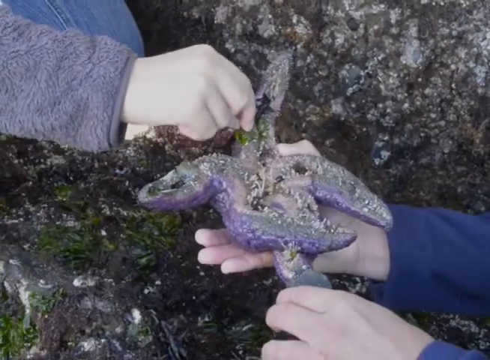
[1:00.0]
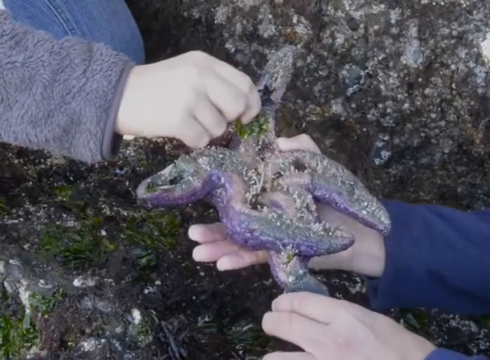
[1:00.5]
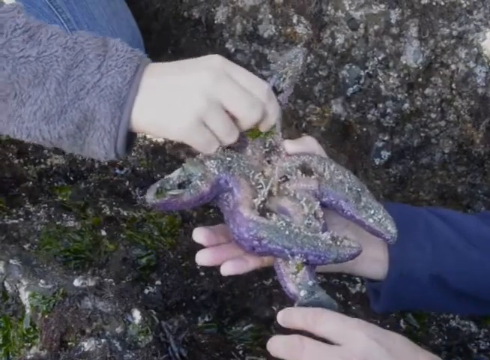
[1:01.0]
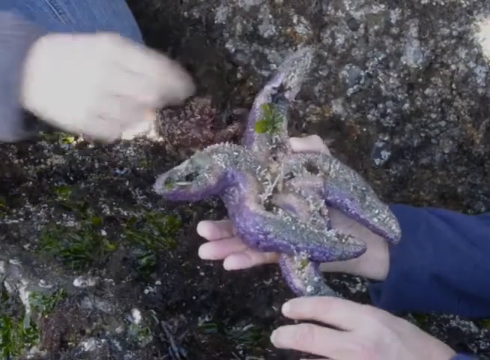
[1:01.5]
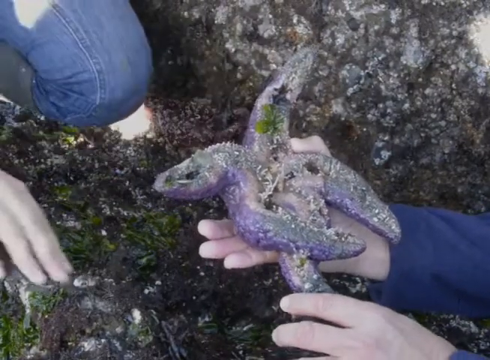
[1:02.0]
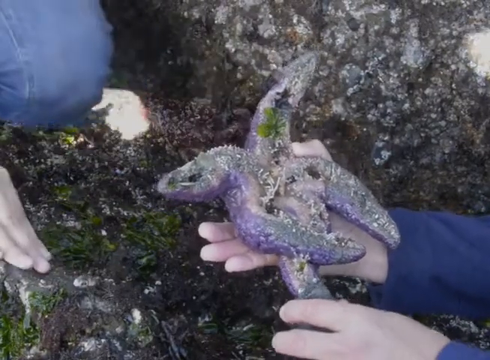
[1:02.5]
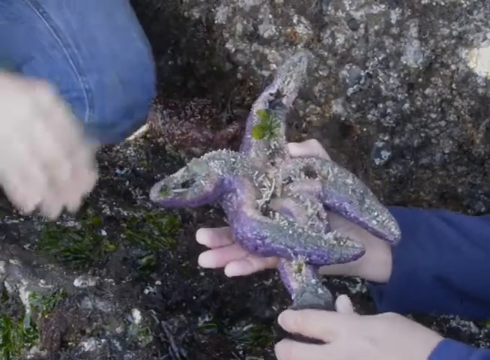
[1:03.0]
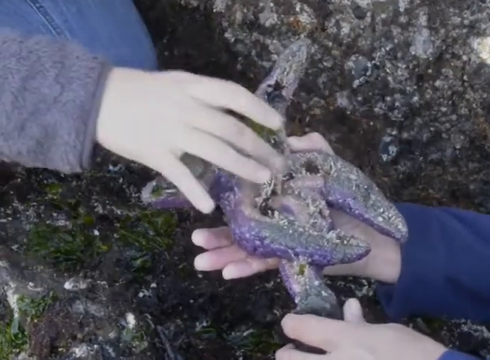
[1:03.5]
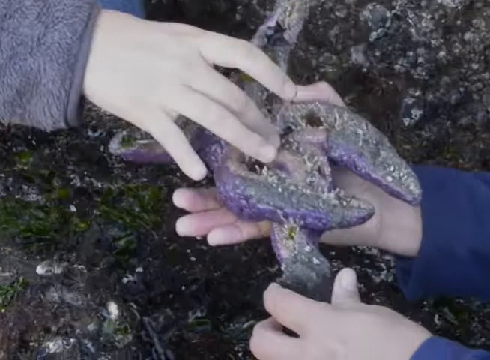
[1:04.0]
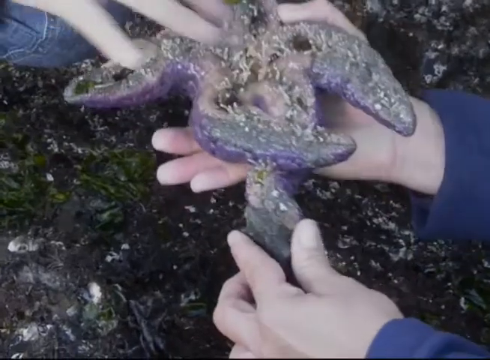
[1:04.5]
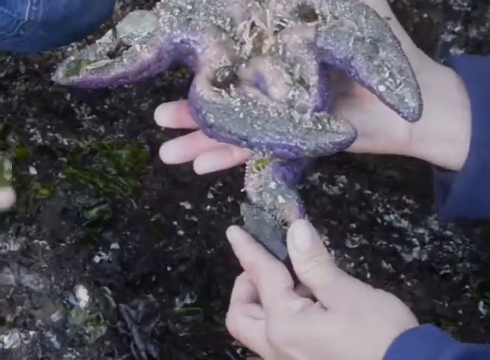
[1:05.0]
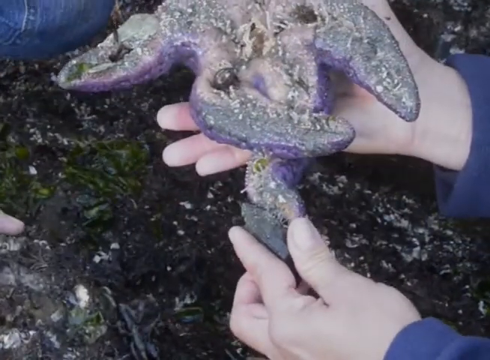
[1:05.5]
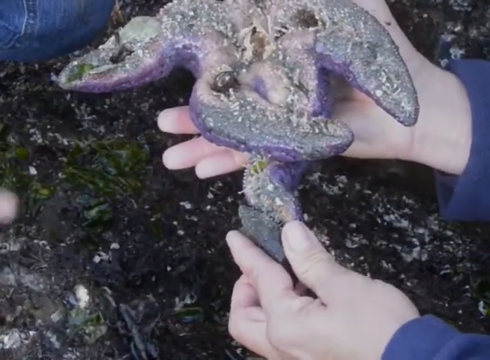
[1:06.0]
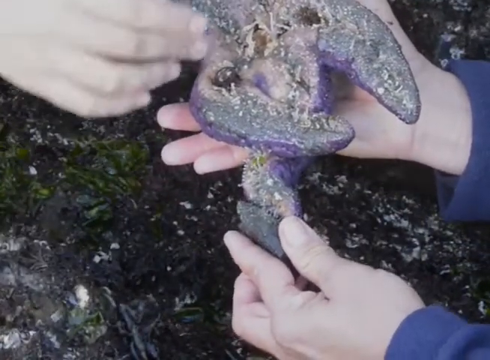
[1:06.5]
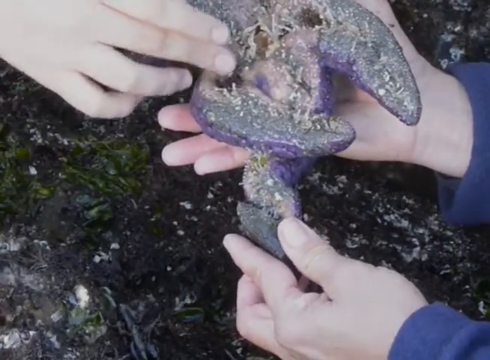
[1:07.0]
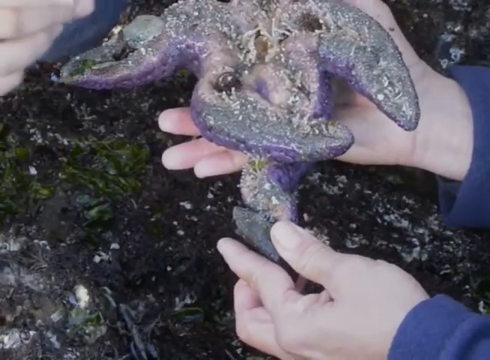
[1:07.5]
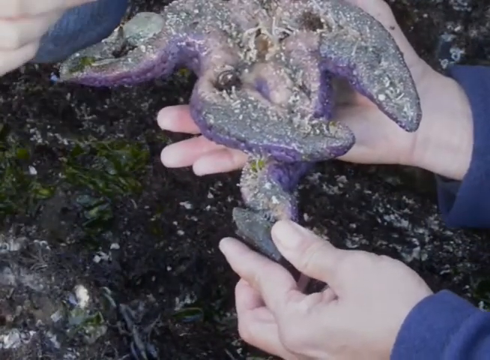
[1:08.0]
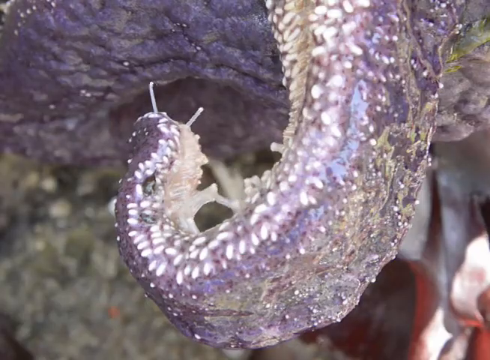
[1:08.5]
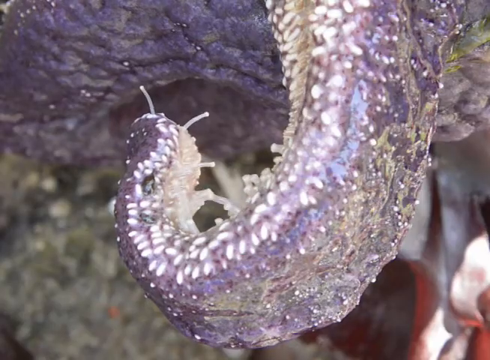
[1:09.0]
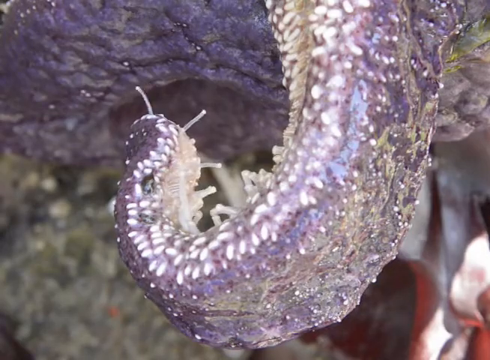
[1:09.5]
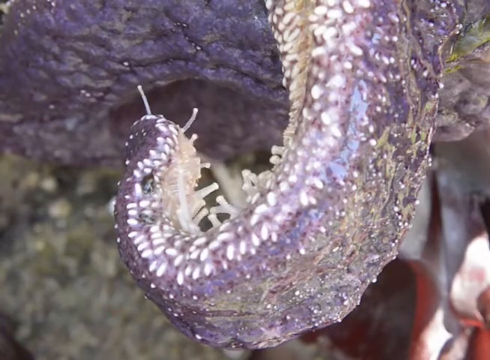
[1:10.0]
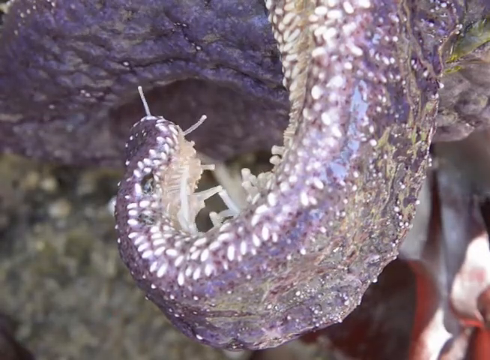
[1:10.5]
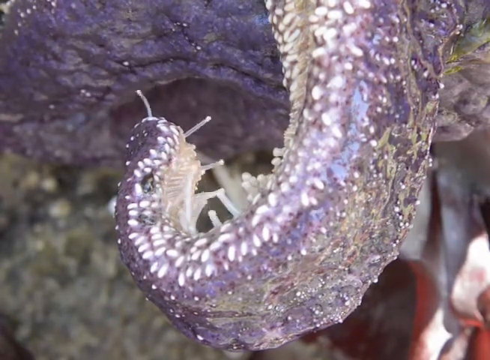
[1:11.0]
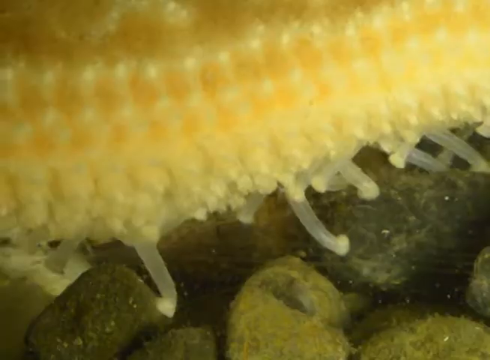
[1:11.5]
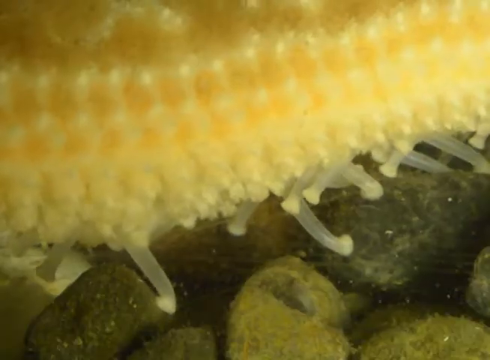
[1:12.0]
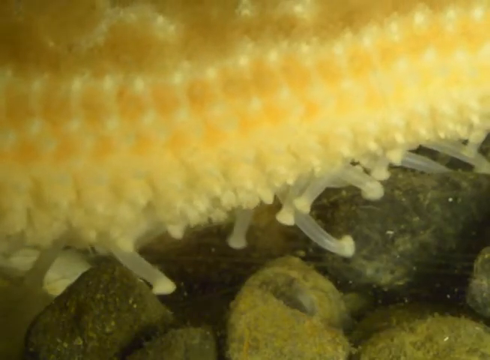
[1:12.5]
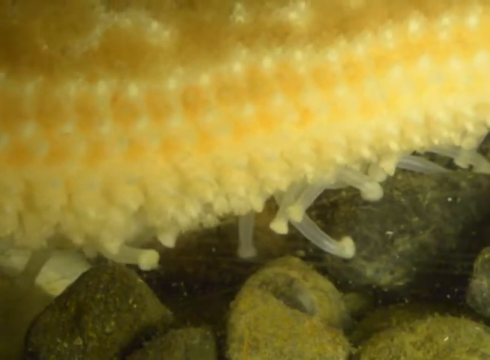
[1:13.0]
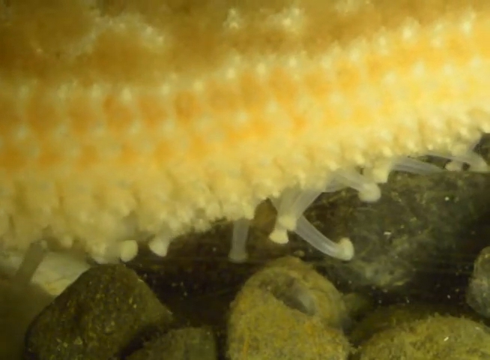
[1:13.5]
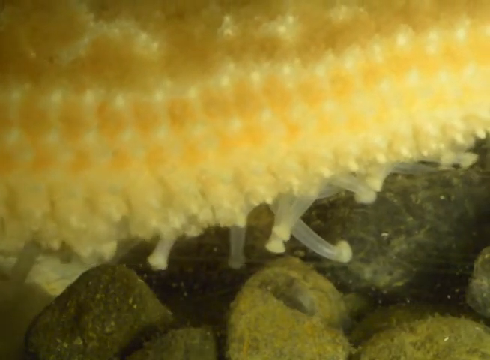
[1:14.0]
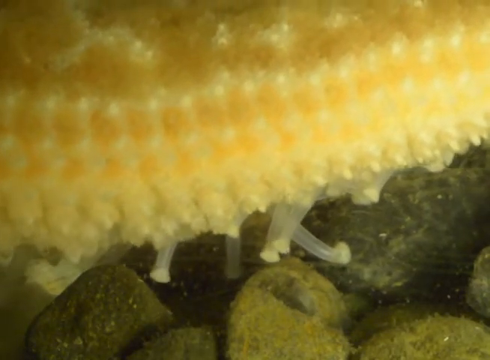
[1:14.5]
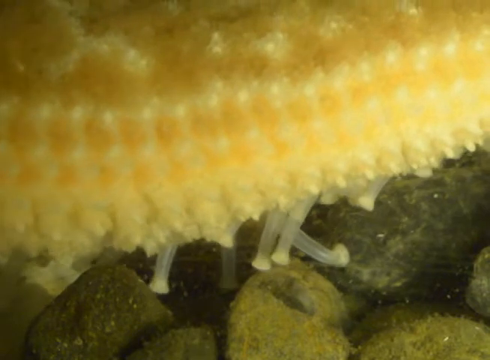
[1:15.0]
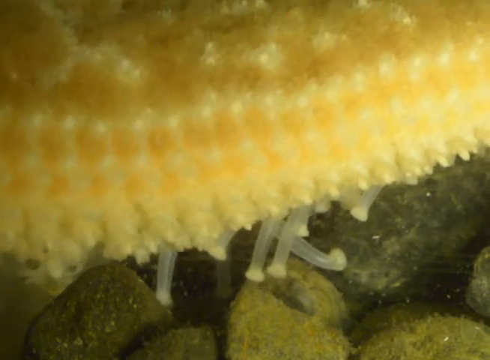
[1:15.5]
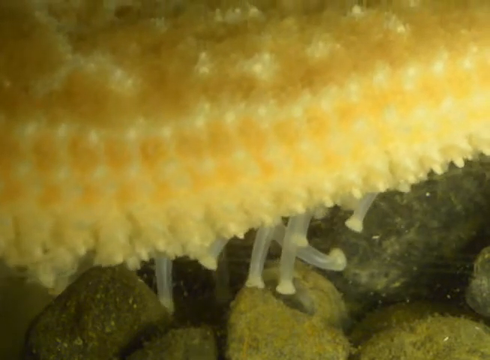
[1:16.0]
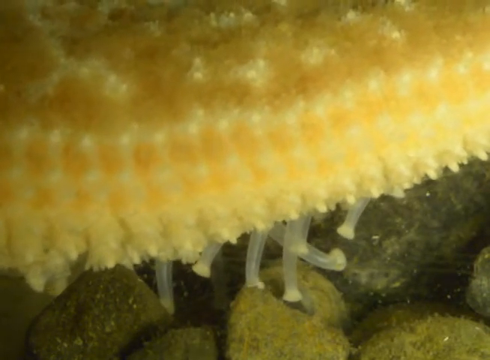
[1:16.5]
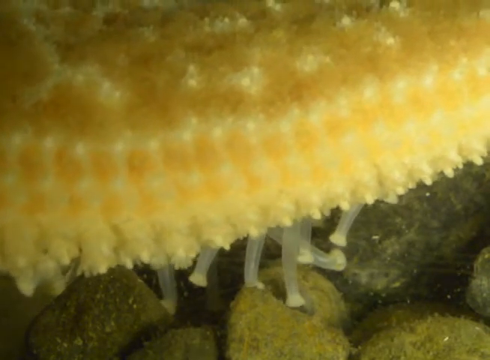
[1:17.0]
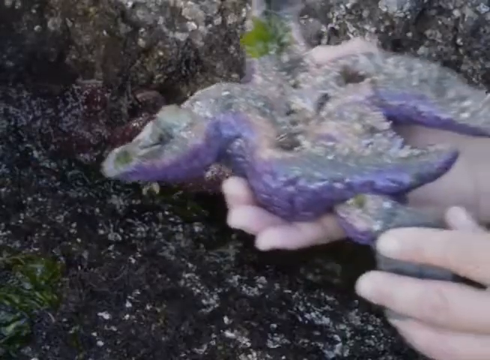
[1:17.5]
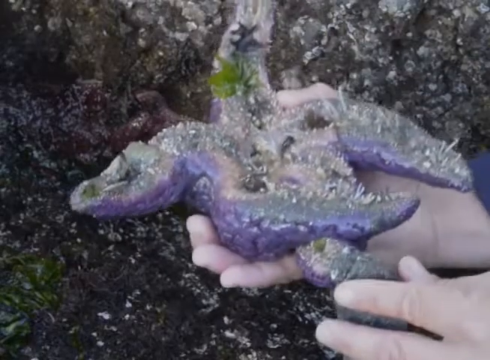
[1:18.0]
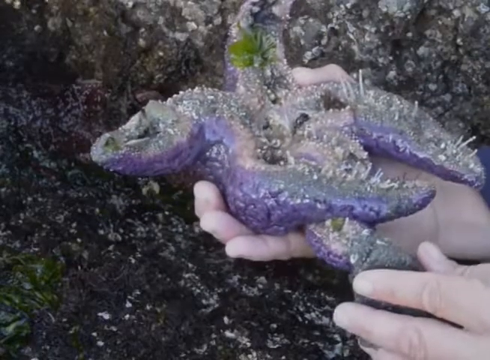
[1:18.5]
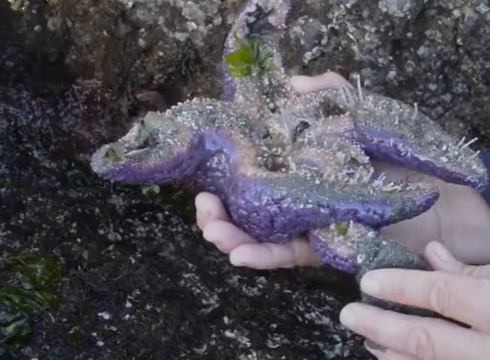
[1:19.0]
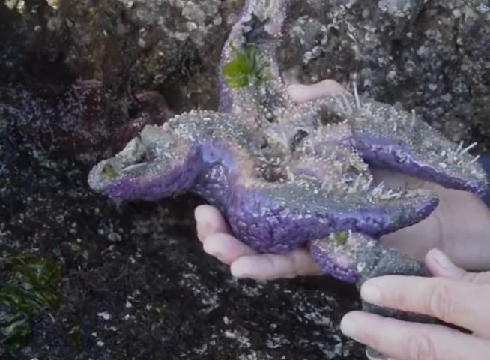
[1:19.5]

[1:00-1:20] The two people touch and hold the different creatures. The camera pans to other creatures flowing close by: a purple one with slimy antennas and a yellow one moving slowly across. As the camera zooms in, the woman has a purple-looking creature in her hand. The camera then pans back to the creatures, which are now underground, while the two people continue exploring. There are different camera angles, including close-ups, and the picture quality is good, showing the creatures at close range and how they move around.